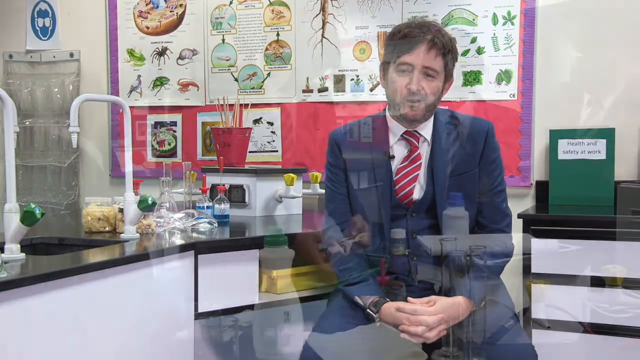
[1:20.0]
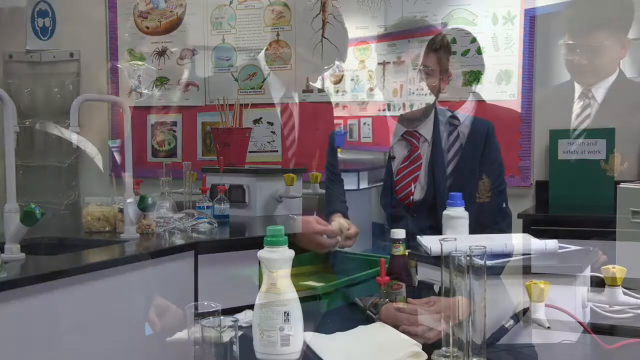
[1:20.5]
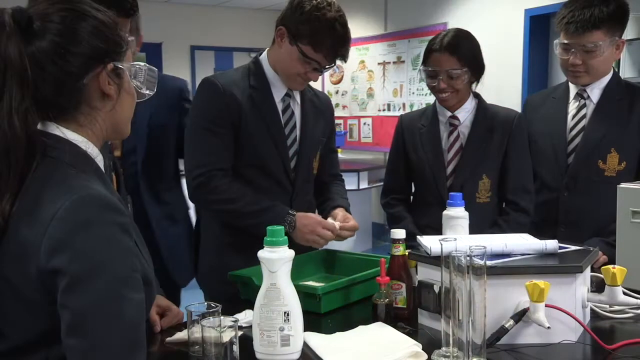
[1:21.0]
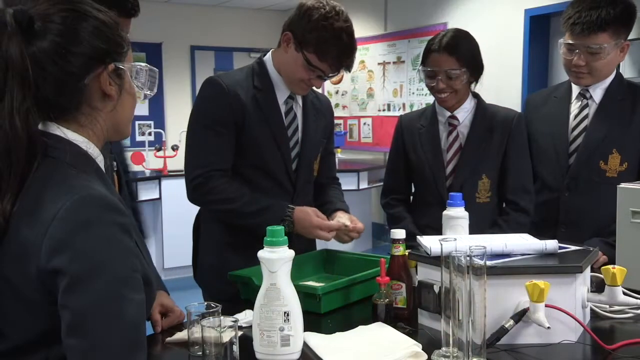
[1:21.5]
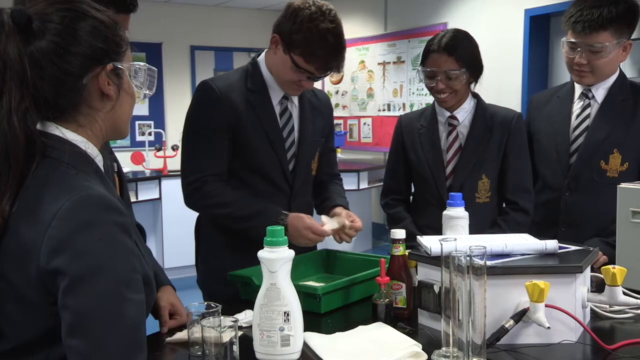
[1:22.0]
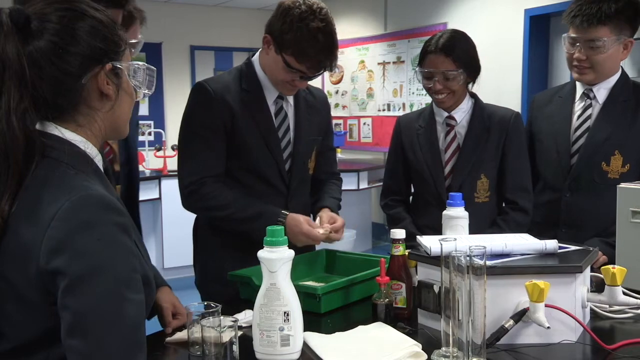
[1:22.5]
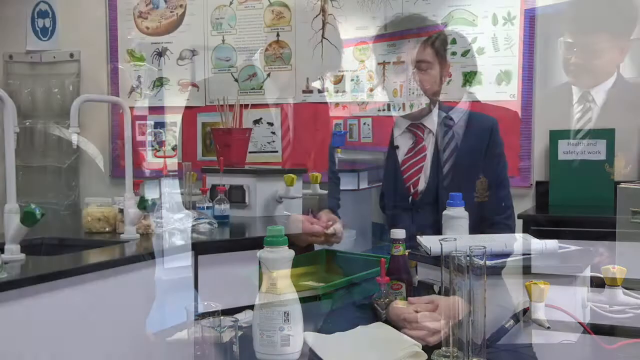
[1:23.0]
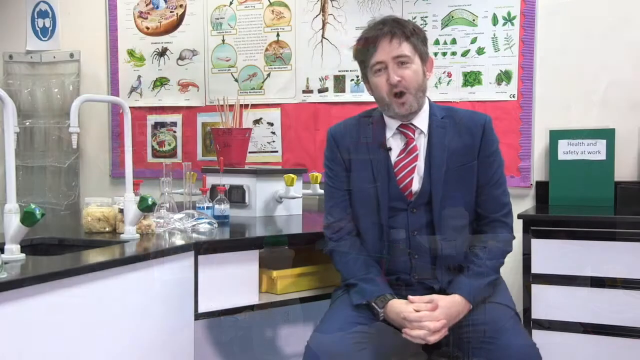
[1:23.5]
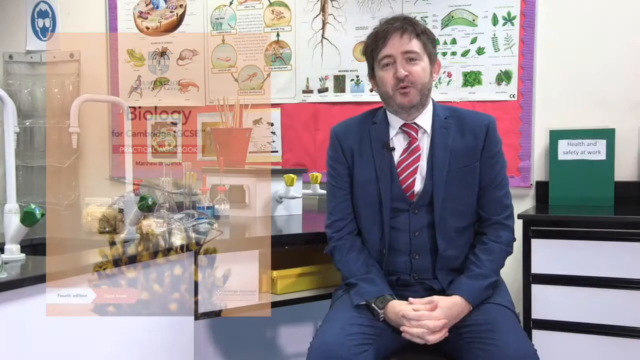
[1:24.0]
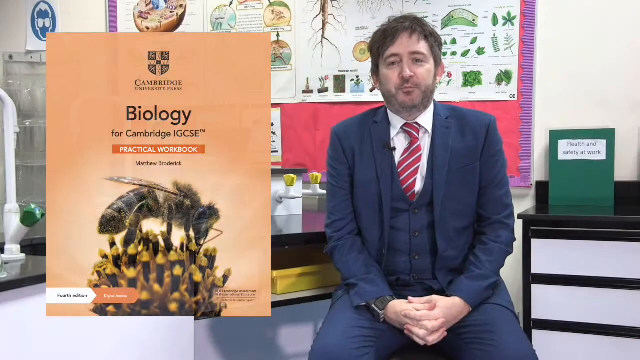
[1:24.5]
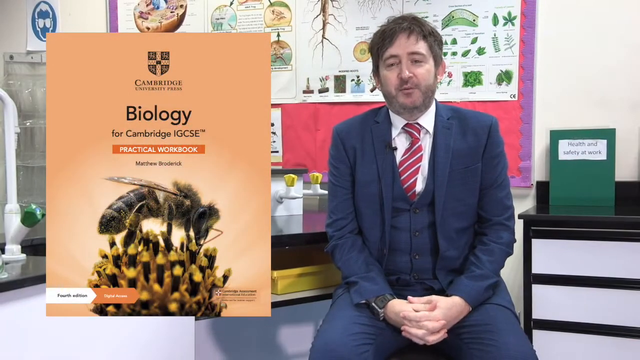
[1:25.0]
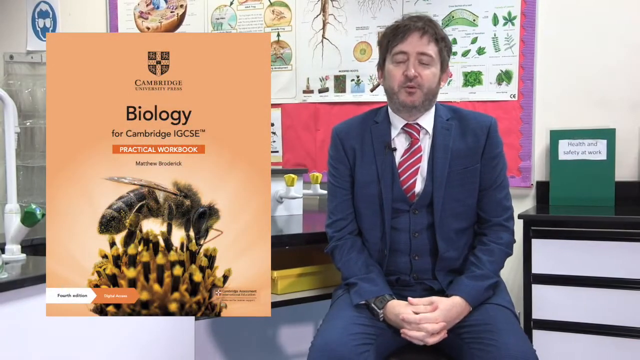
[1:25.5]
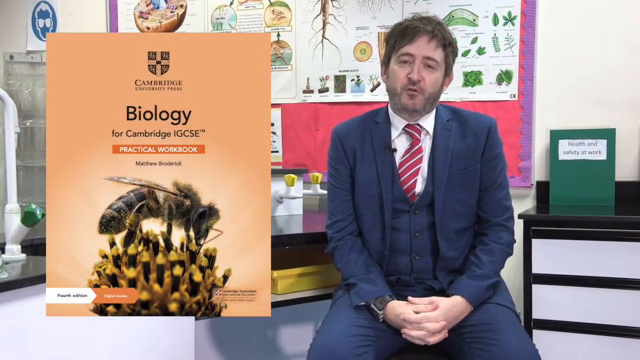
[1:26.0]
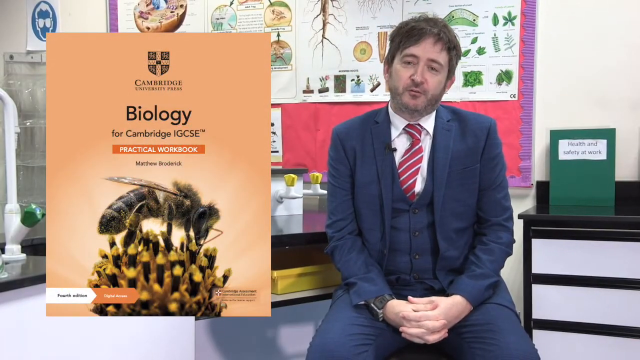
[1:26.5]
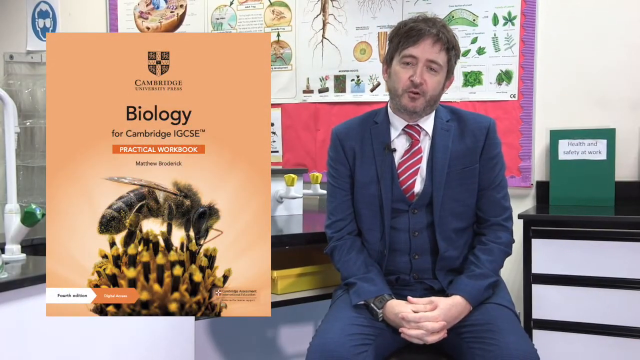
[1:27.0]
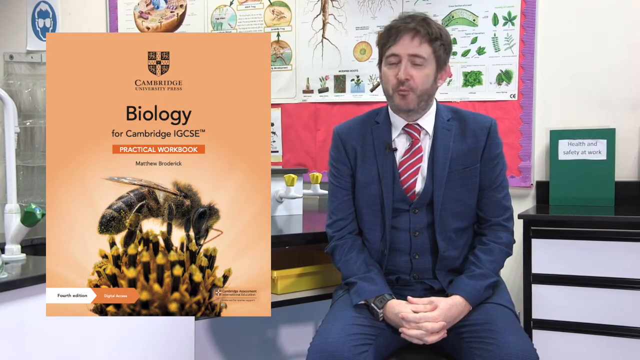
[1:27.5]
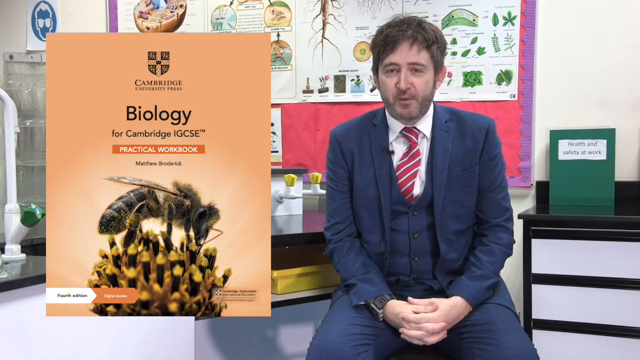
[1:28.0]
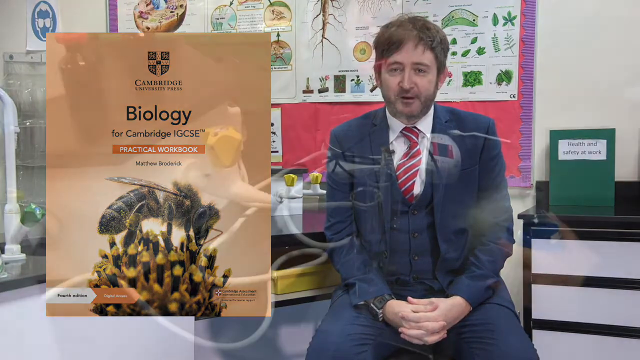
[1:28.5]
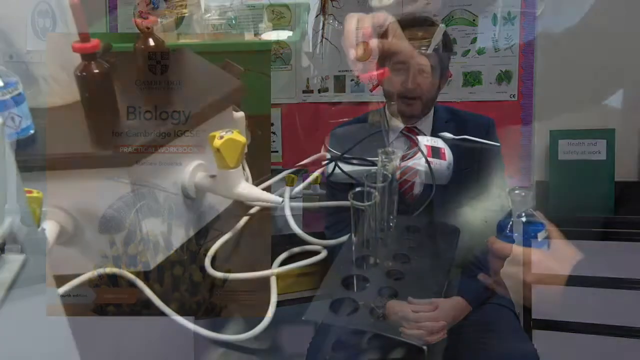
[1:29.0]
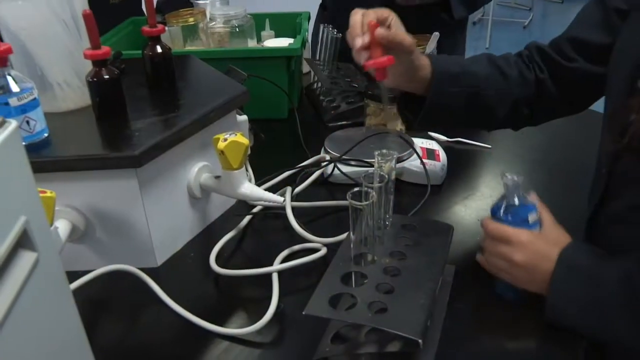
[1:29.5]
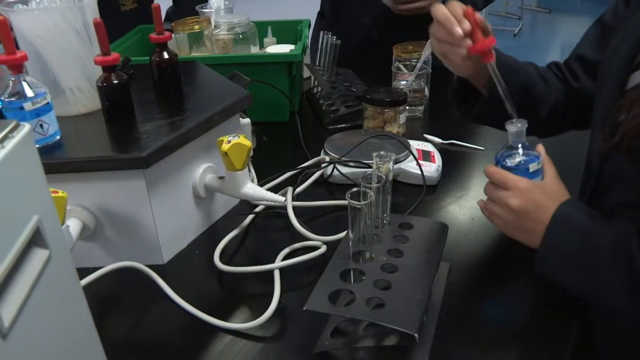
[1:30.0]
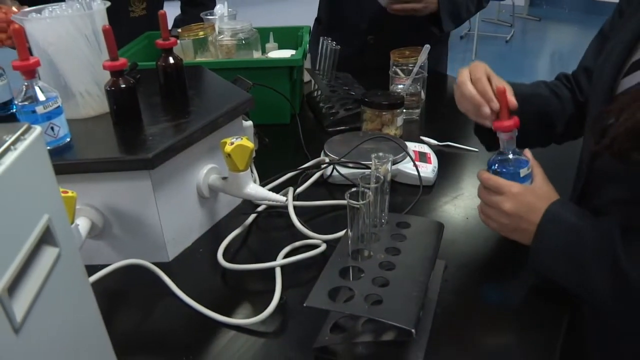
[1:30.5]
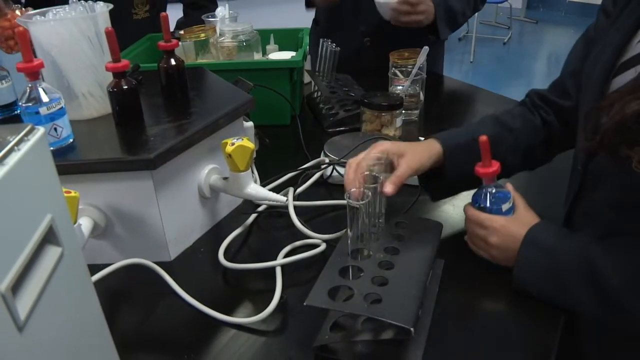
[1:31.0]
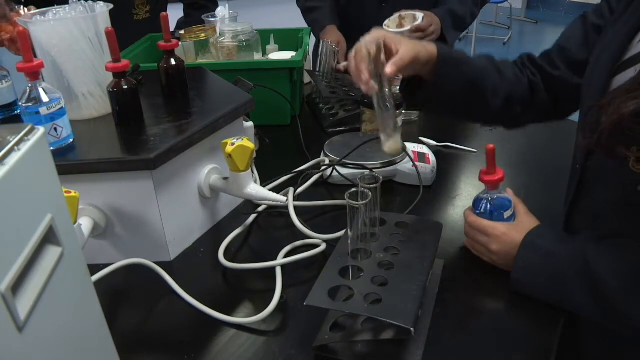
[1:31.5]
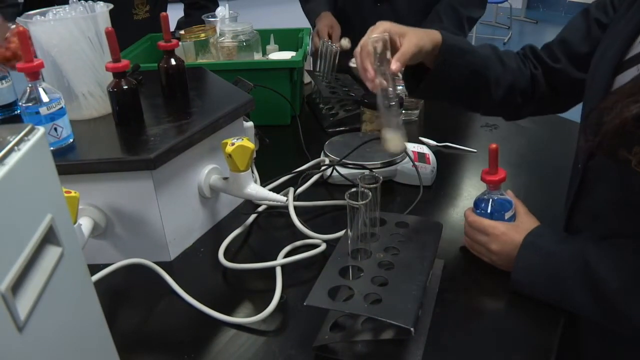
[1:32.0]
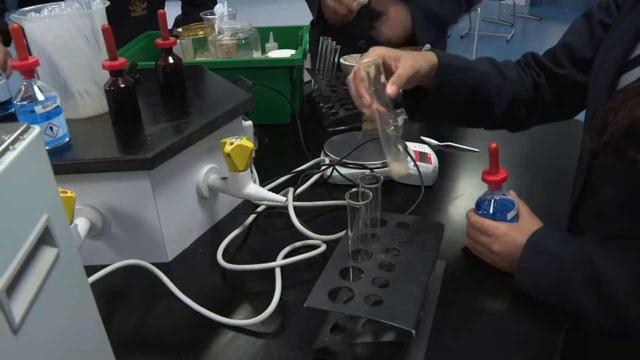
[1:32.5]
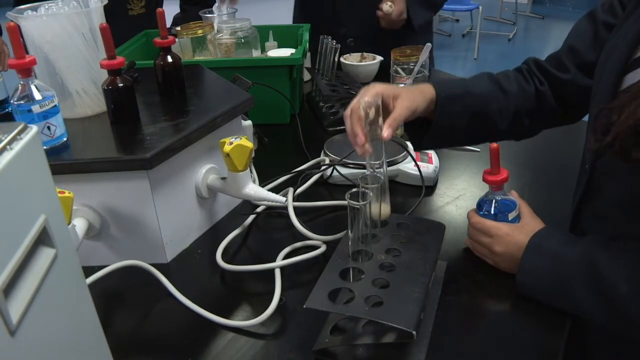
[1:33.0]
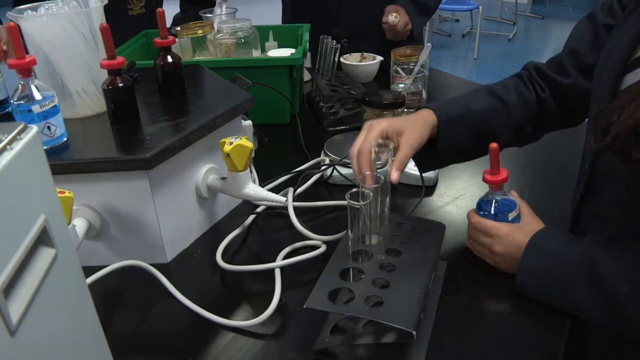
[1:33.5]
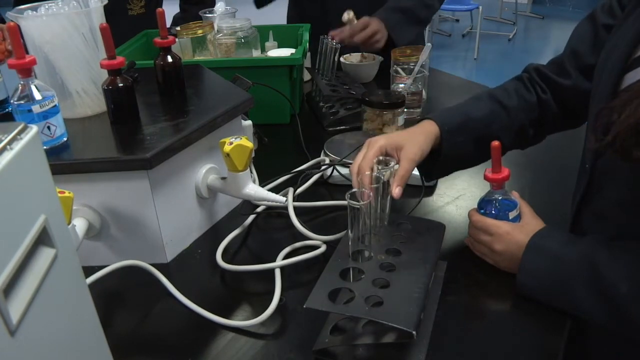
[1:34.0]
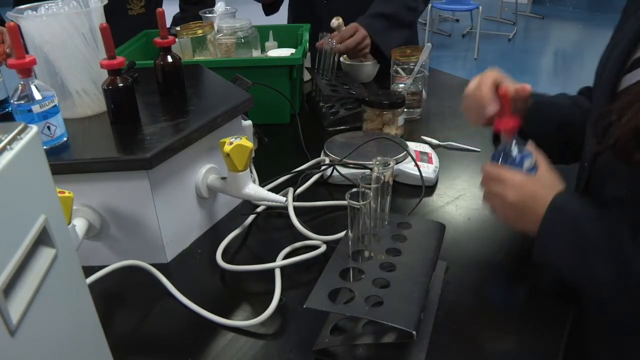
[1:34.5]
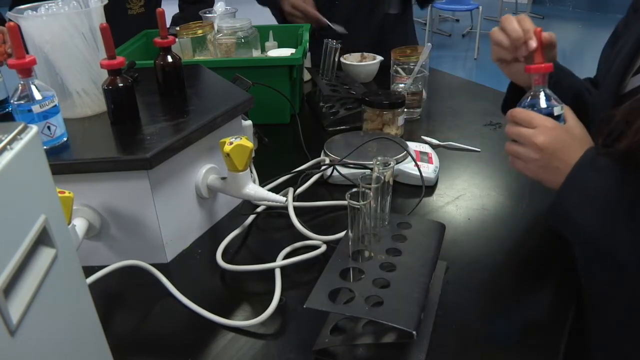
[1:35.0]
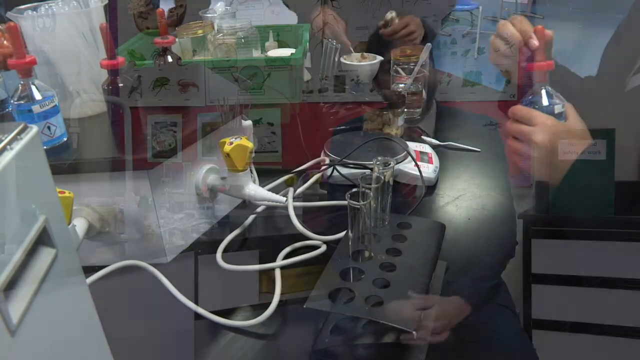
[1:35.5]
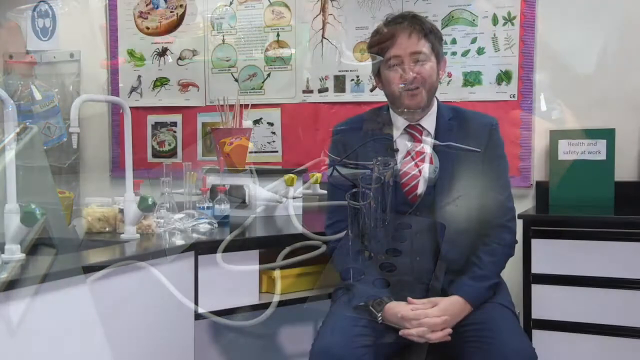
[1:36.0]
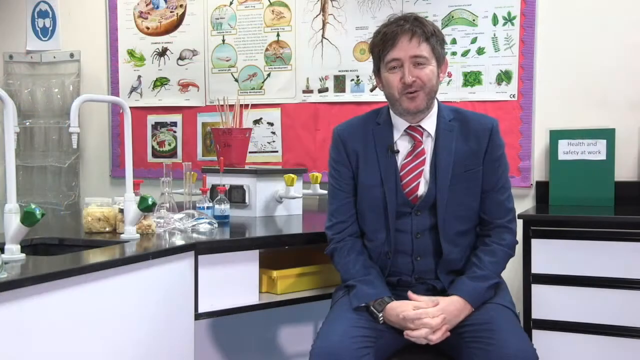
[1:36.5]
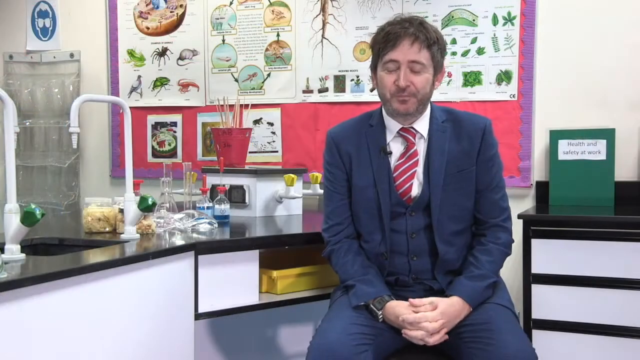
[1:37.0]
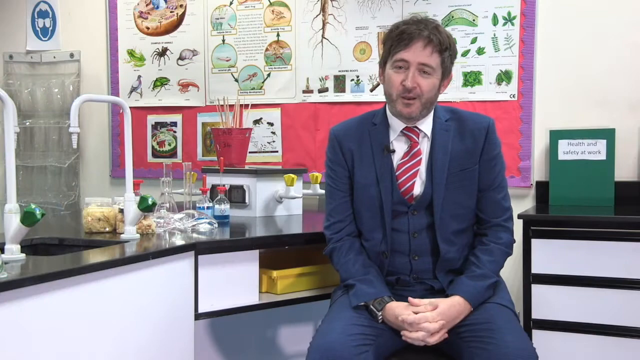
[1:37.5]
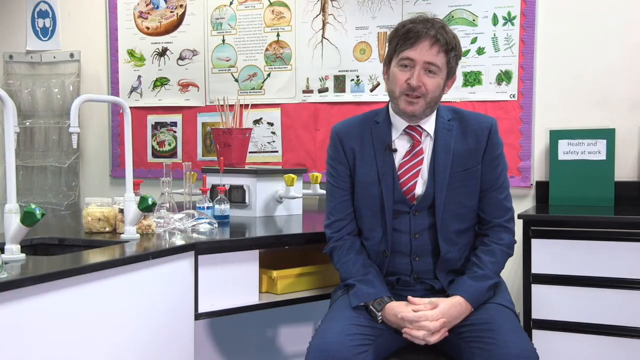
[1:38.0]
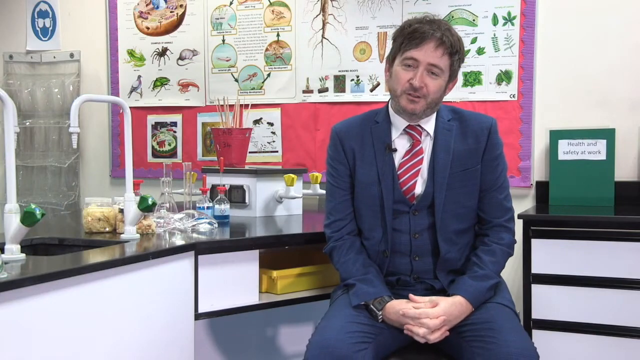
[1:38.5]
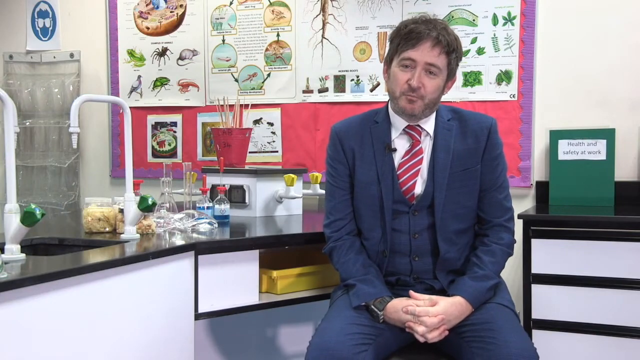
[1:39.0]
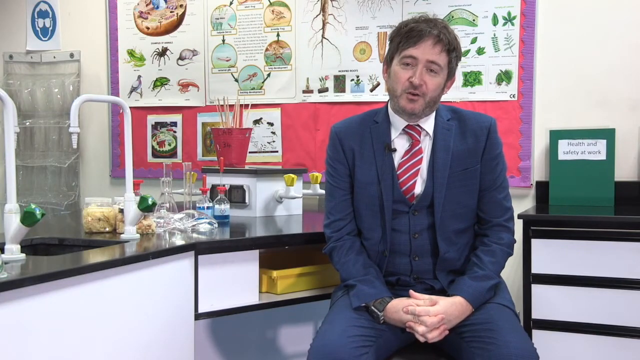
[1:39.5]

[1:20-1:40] A man who looks to be a teacher sits talking to the audience. He looks very smart in his three-piece suit and has slightly longish, scruffy hair. The video switches very quickly to five students and then quickly back to the man sitting in a science classroom. Next to him on the screen appears the biology book he is perhaps talking about, with the words "Biology for Cambridge IGCSE Practical Workbook" and a wasp on a flower on it. The video then shows a student conducting an experiment; only their hands are visible, so it is unclear whether it is a boy or a girl. They are using test tubes and hold a bottle with a blue liquid in their left hand. The video goes back to the teacher talking in the science room, then switches to five students, two girls and three boys, all smiling and appearing to conduct an experiment.